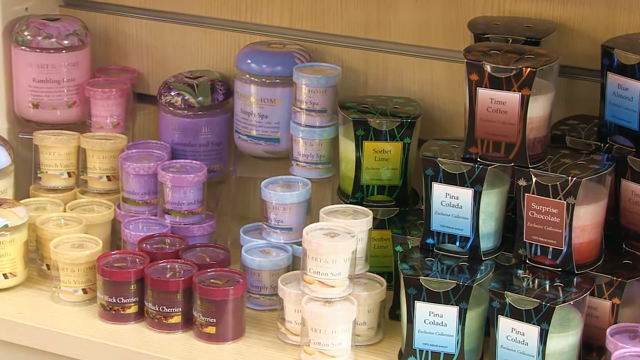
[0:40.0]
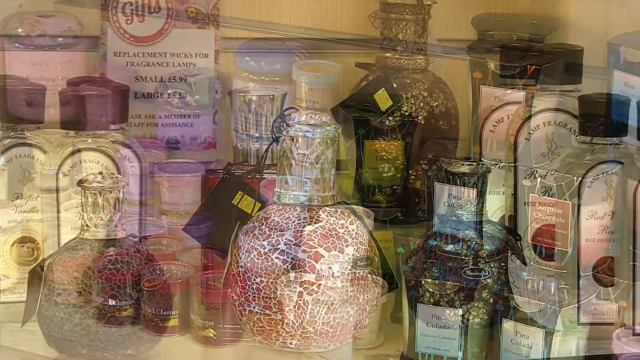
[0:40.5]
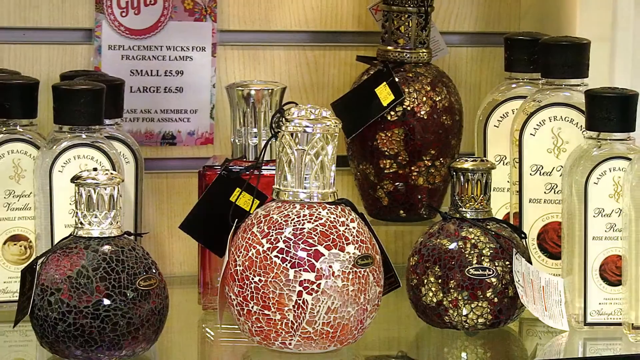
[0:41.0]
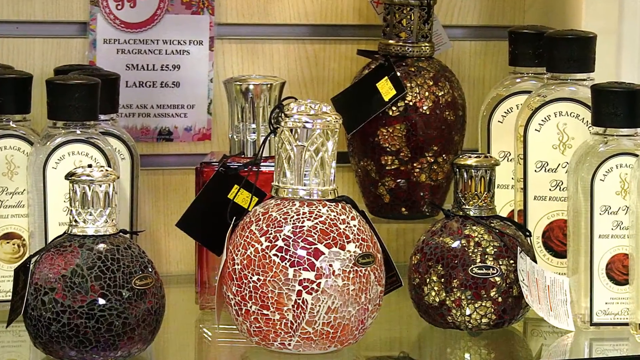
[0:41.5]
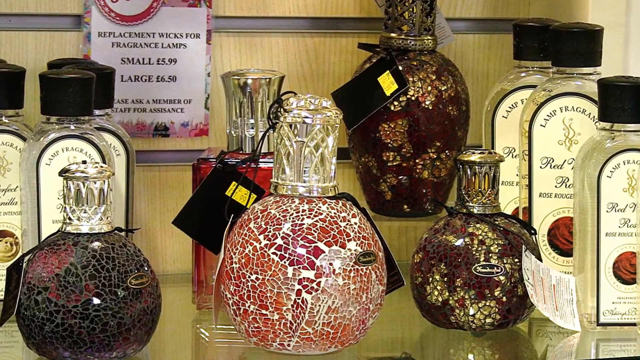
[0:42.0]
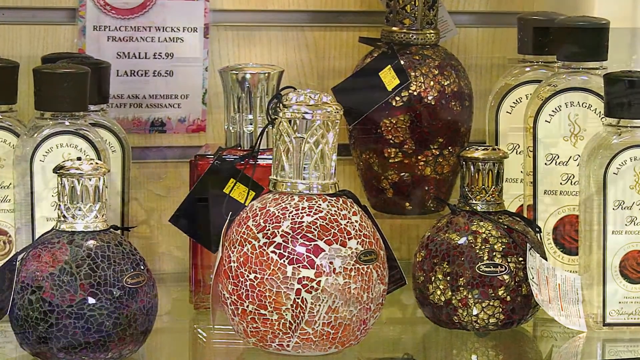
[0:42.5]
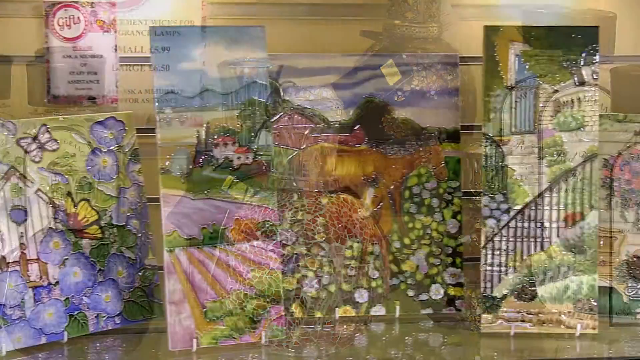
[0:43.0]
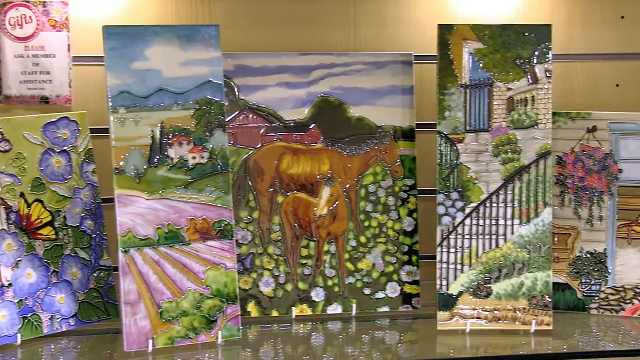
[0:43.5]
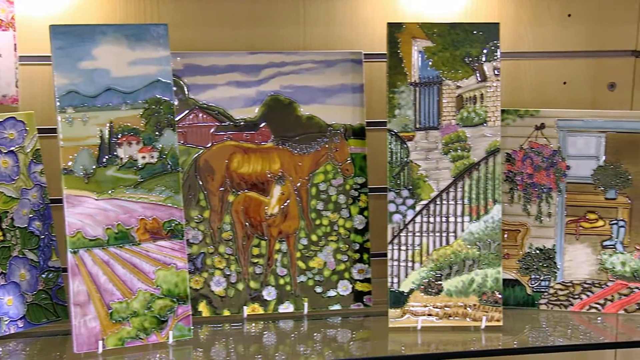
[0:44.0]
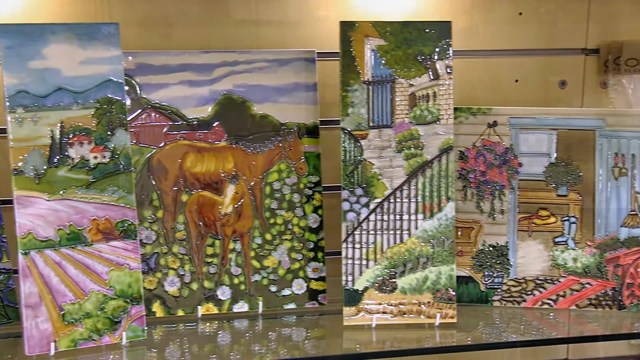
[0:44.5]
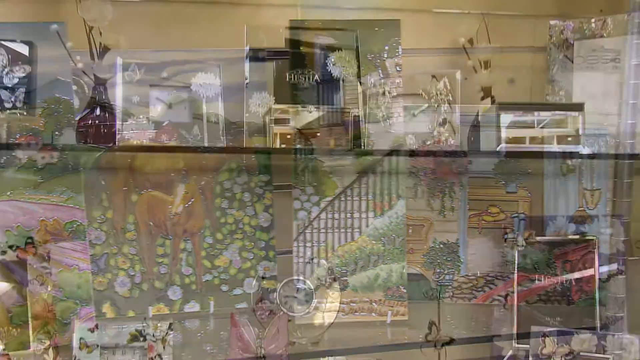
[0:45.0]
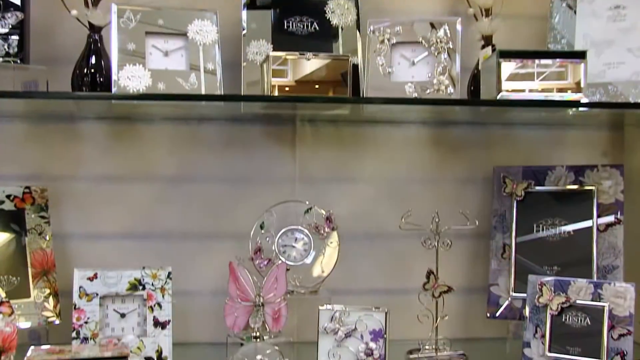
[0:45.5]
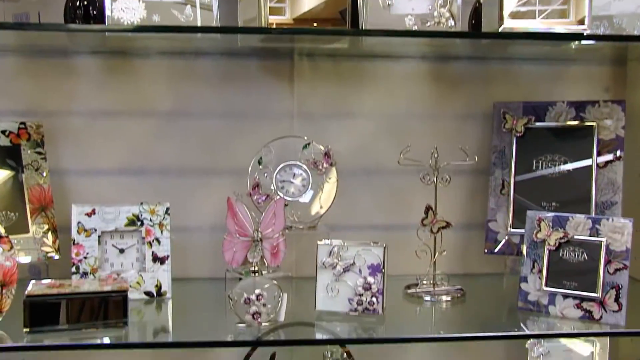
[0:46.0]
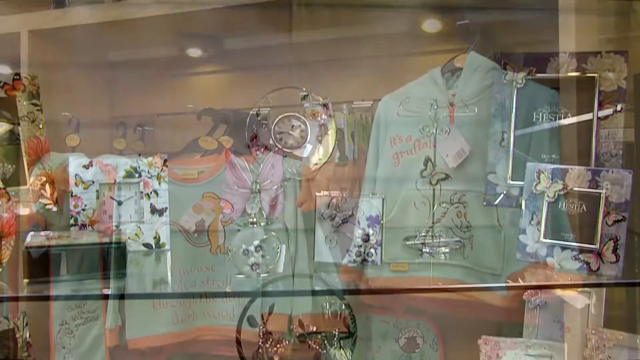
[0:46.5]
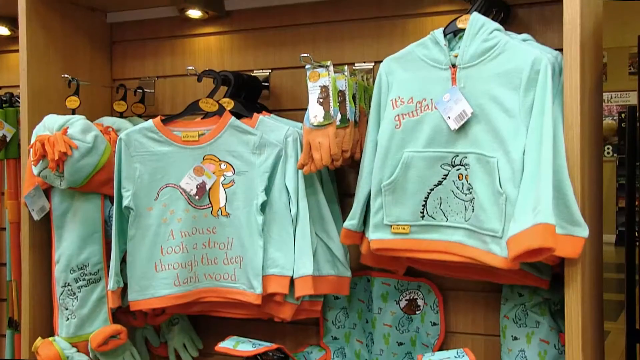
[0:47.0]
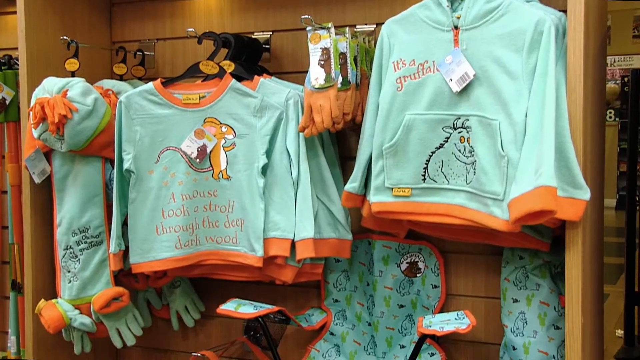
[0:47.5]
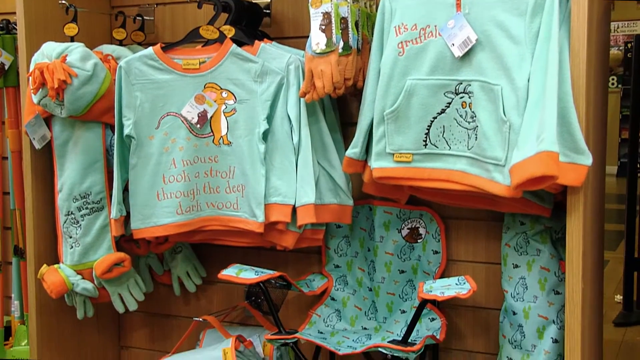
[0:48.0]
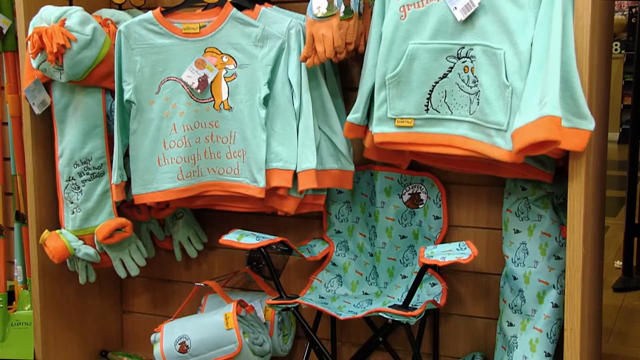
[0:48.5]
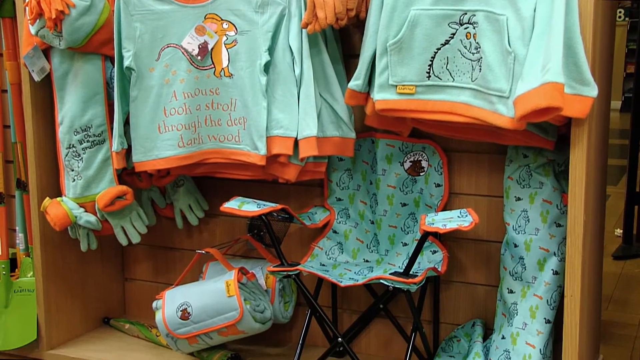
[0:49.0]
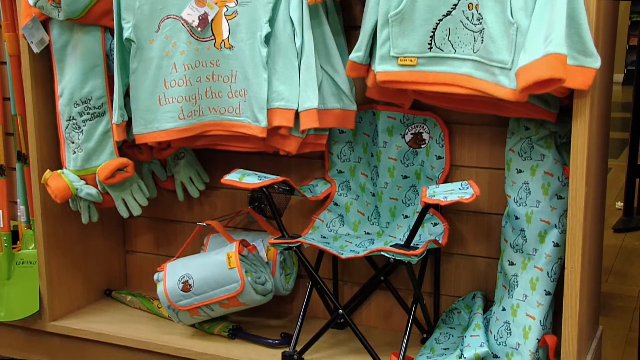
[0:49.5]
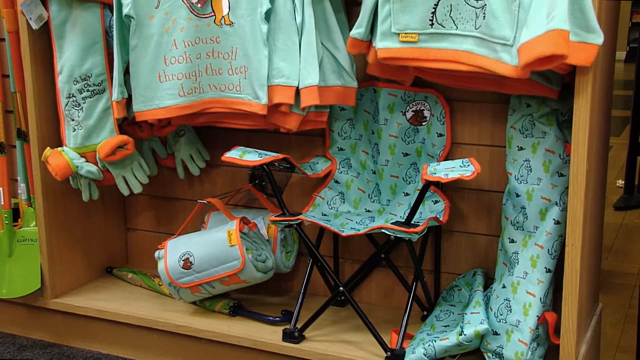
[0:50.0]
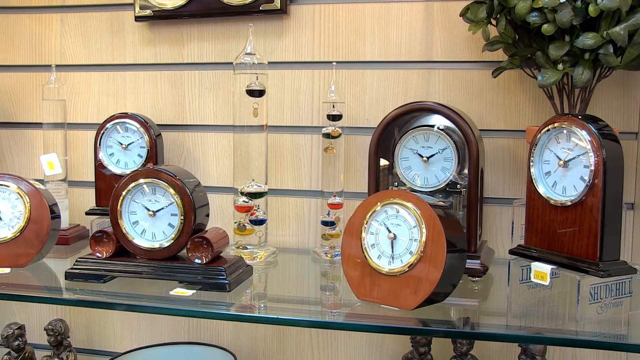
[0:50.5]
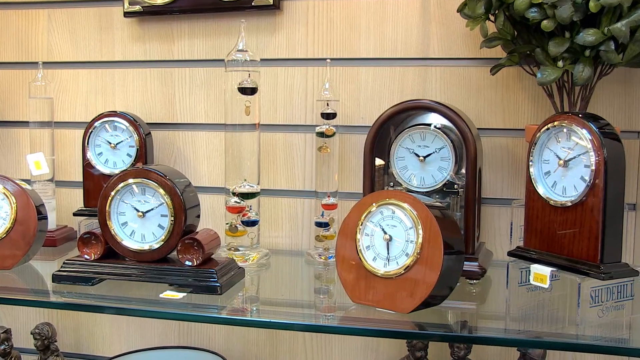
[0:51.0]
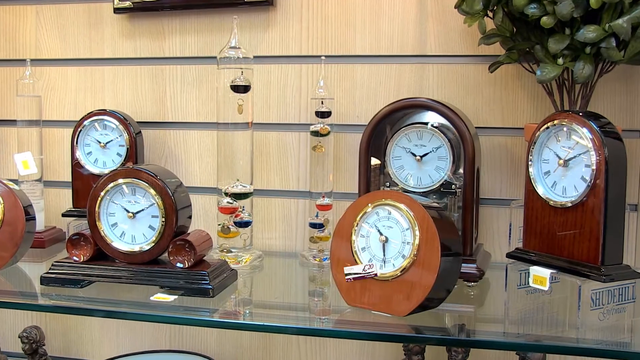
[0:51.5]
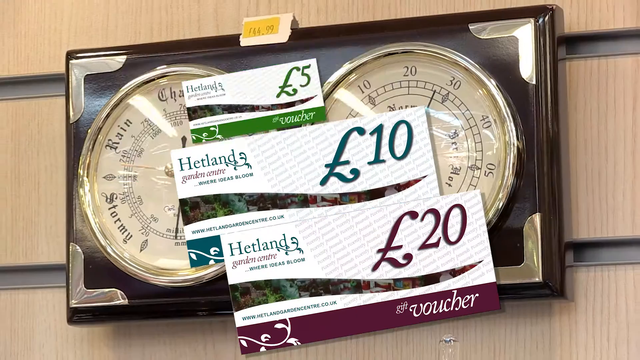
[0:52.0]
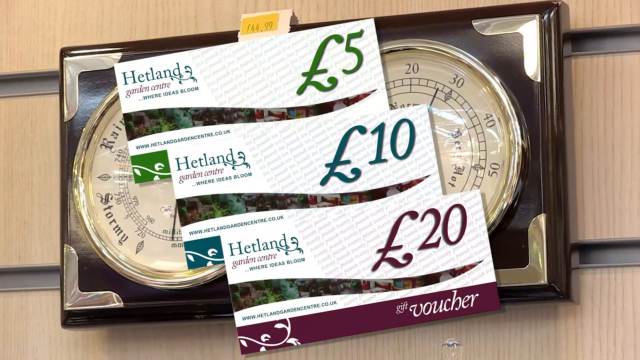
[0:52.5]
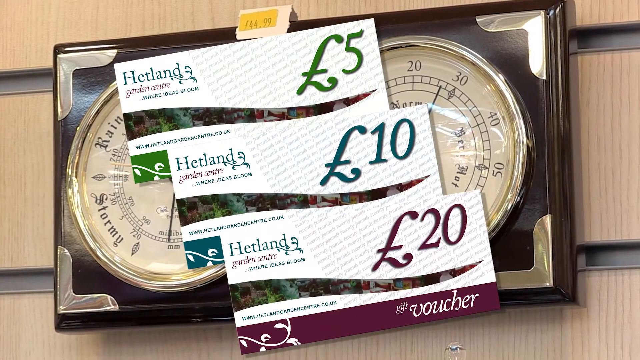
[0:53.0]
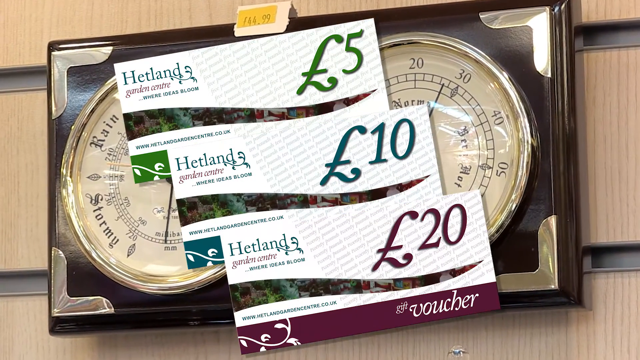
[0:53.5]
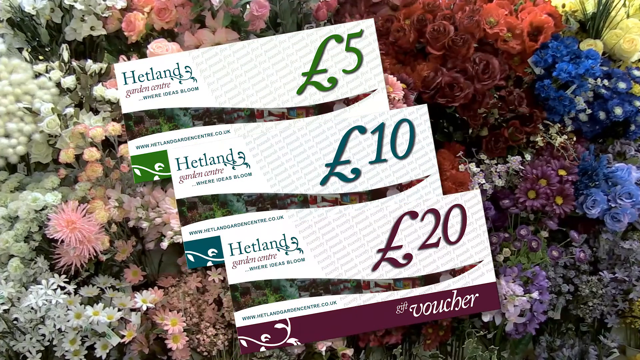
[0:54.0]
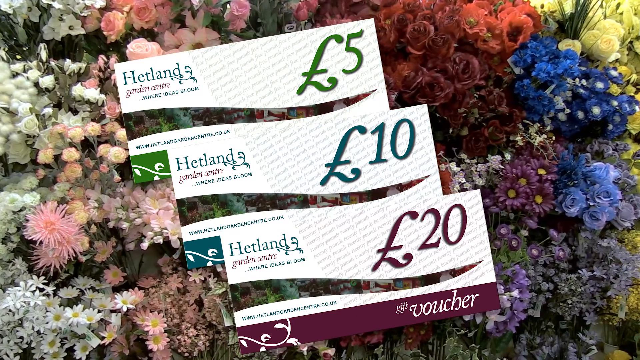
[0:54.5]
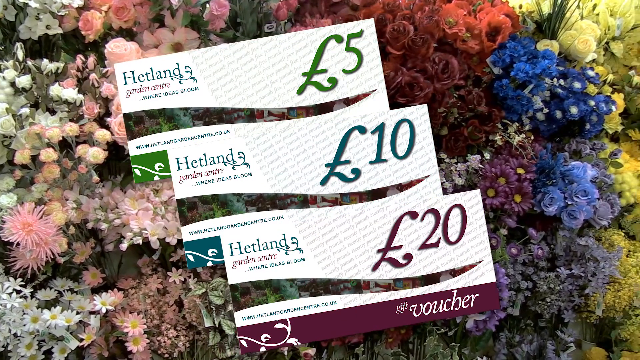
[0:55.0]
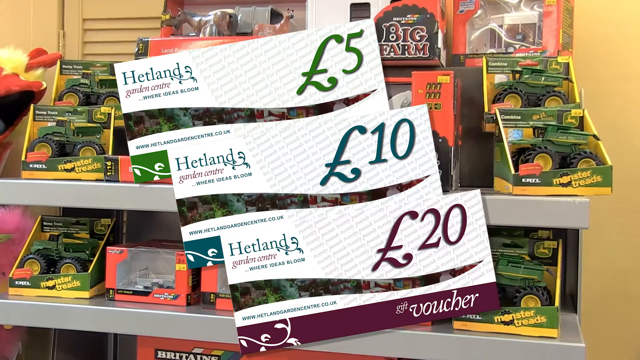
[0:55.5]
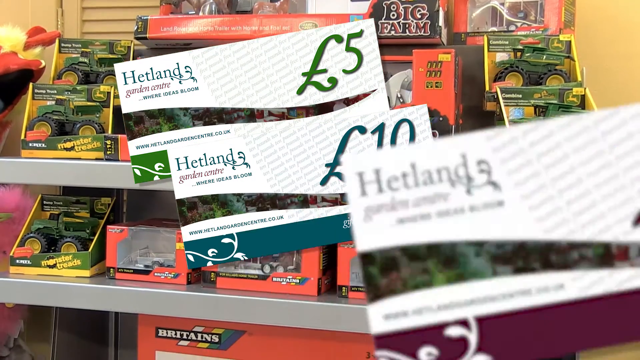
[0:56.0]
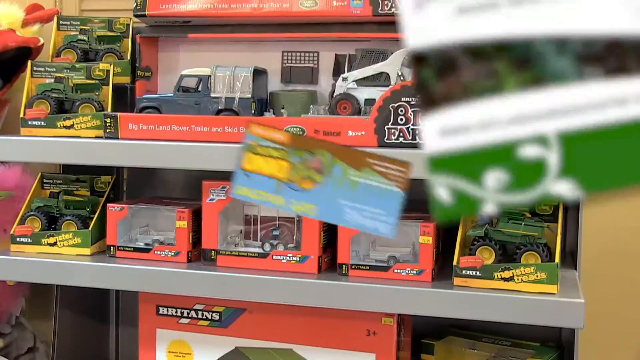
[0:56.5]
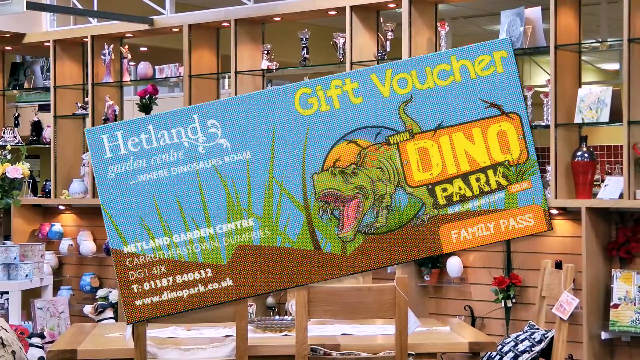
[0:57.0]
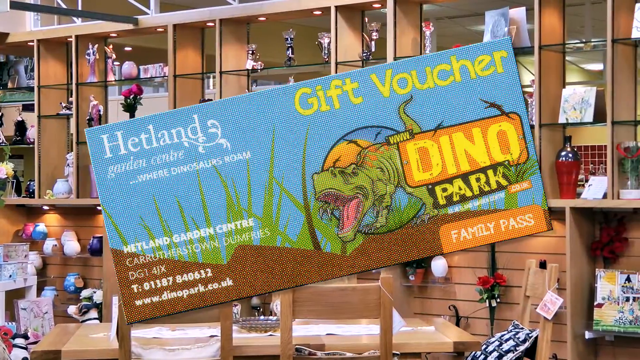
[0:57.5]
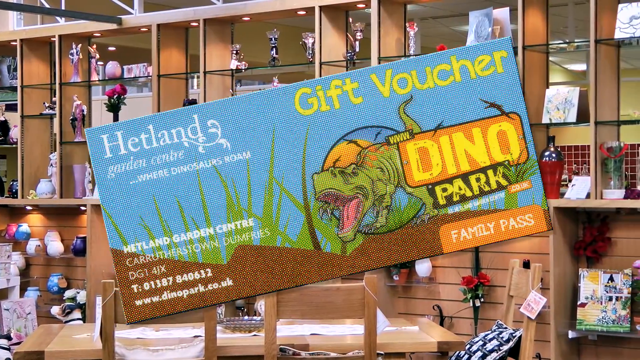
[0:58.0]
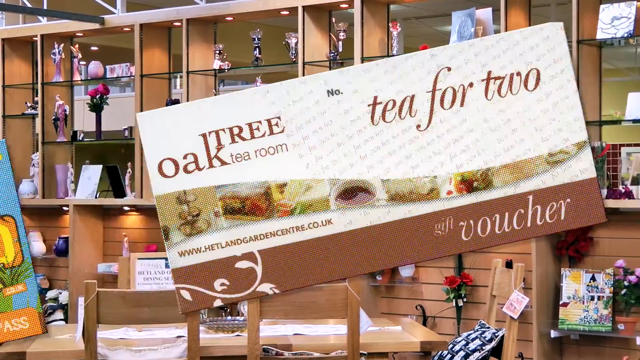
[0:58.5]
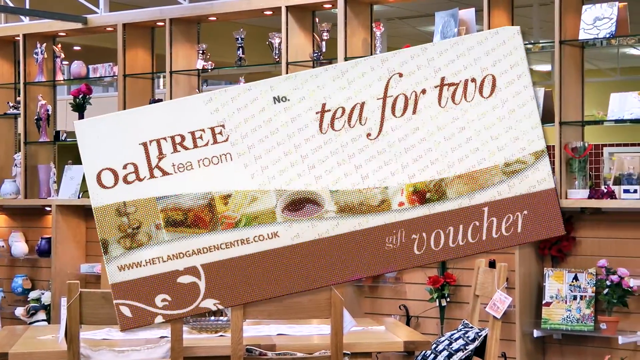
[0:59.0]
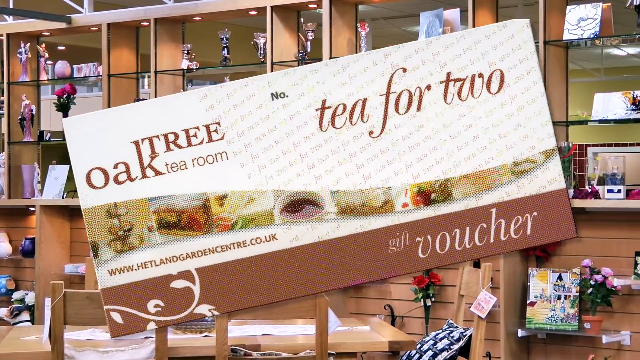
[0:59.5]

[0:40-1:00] What look like plastic jarred goods appear in yellow, blue, peach, purple and red, along with little tubs of something. A close-up shows what may be perfume or candles, with the text "fragrance lamps"; they are fragrance lamps and possibly oils. Then what might be gift cards are shown, and the video flashes through many items: clothing, including what seem to be teal green sweatshirts with animals and writing on them, a chair, and brown wooden clocks for sale. A Hetland's voucher pops up, with a 10, a 20 and a 5, followed by a voucher for Oaktree Tea for two. The place looks like it sells many different things. There are many tub-like items in yellow, white, purple and red that look like candles or possibly chocolates or some type of food.